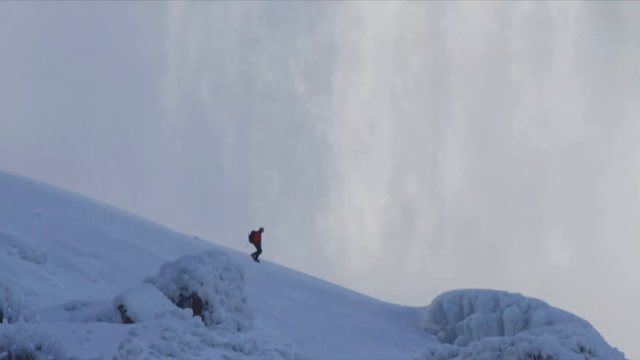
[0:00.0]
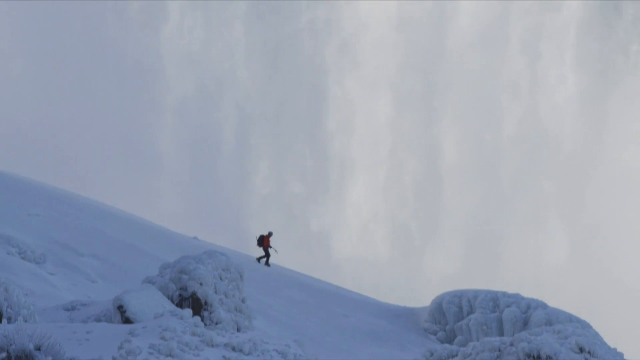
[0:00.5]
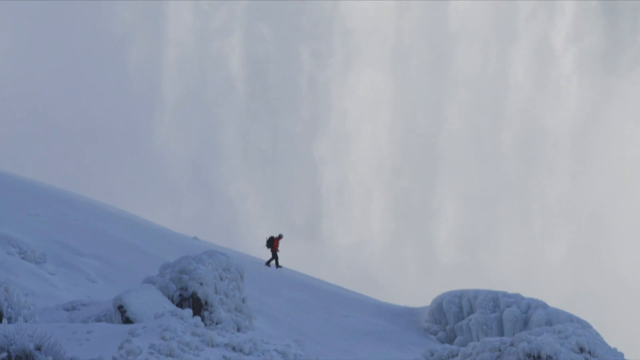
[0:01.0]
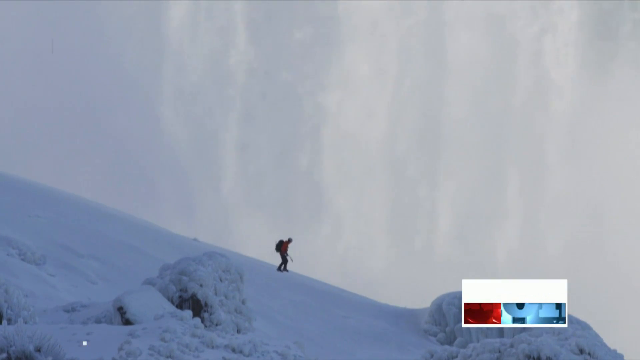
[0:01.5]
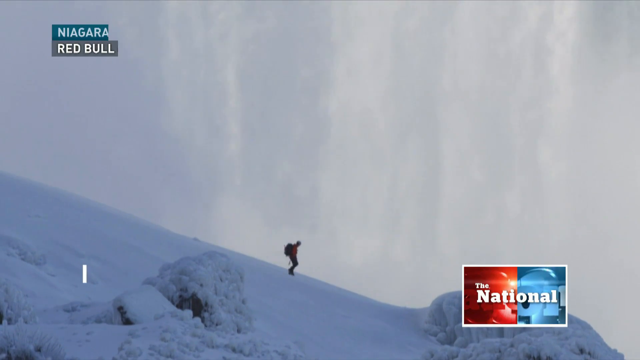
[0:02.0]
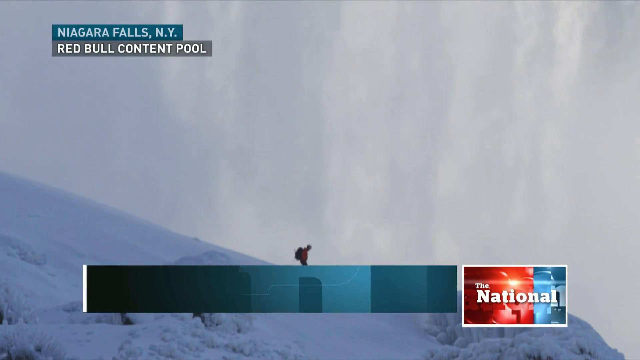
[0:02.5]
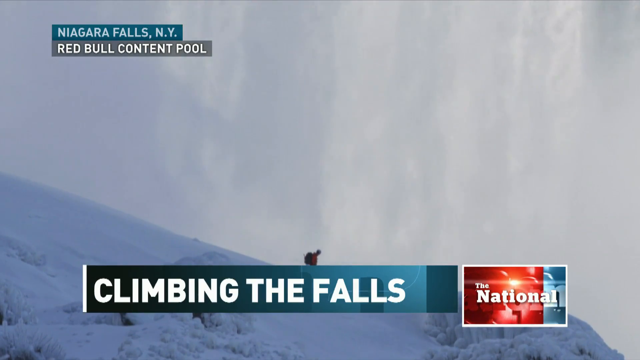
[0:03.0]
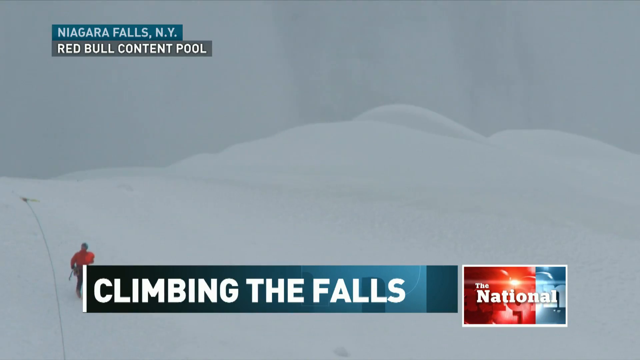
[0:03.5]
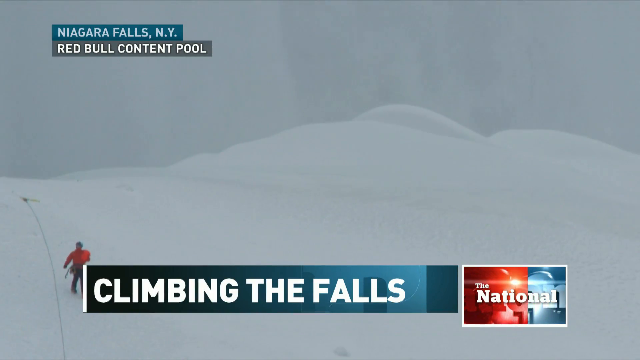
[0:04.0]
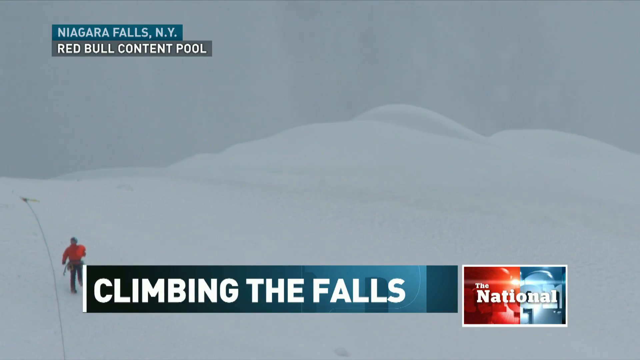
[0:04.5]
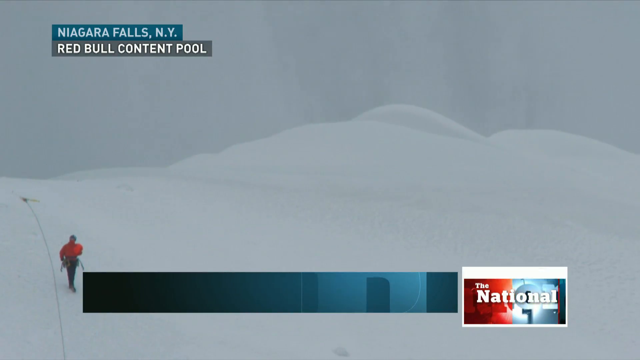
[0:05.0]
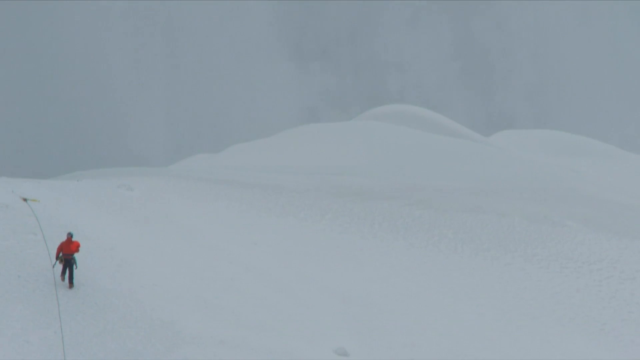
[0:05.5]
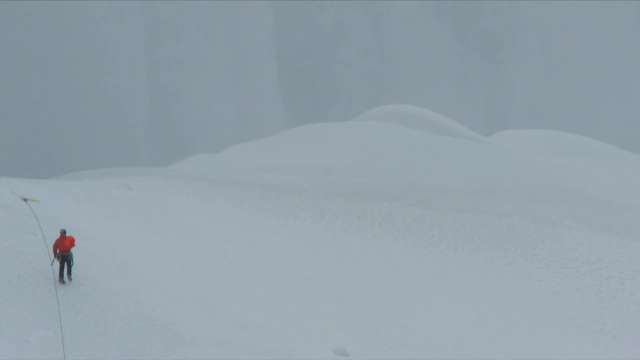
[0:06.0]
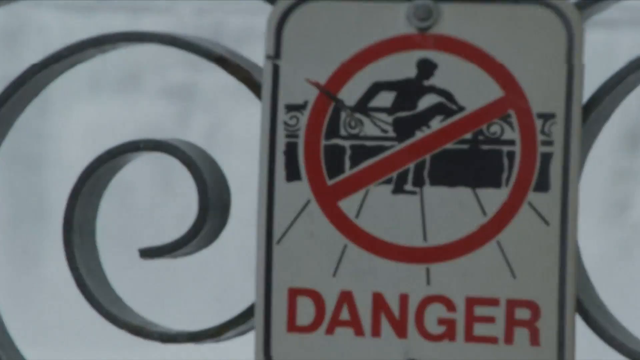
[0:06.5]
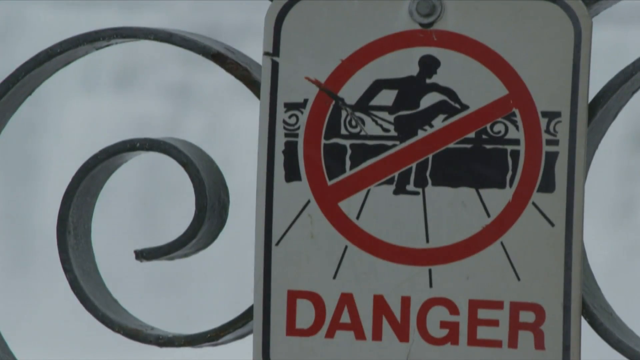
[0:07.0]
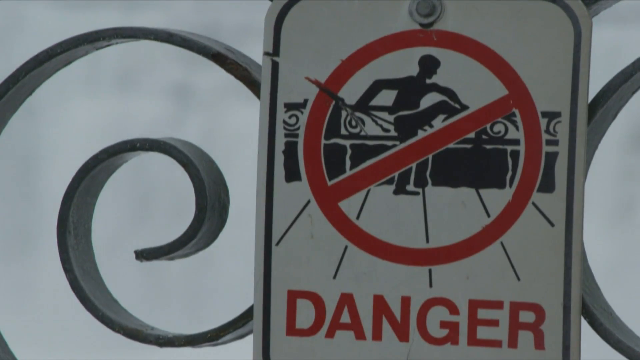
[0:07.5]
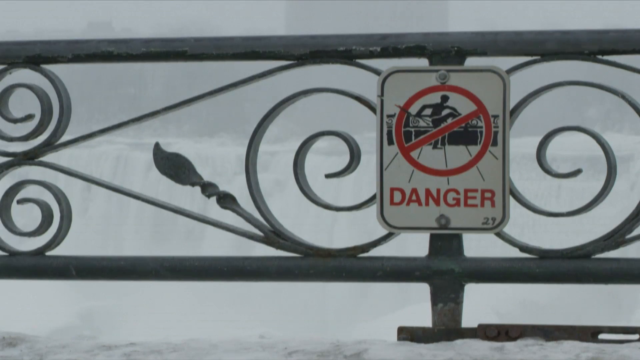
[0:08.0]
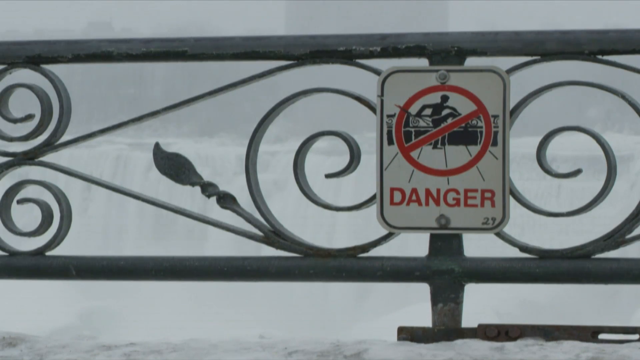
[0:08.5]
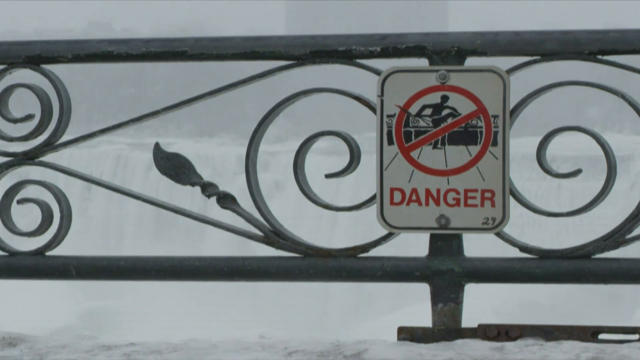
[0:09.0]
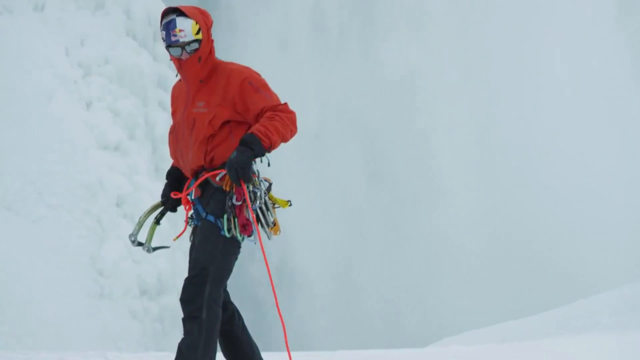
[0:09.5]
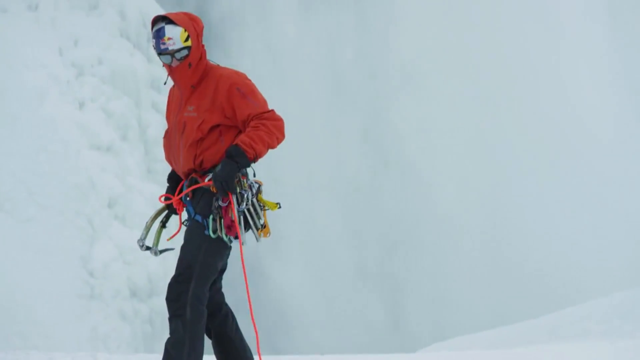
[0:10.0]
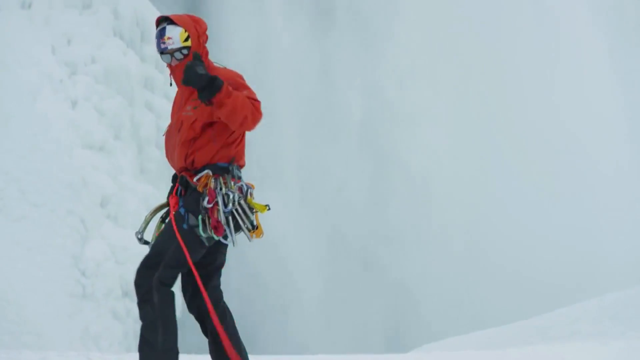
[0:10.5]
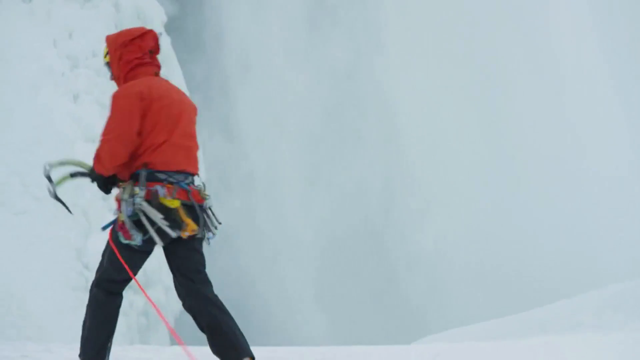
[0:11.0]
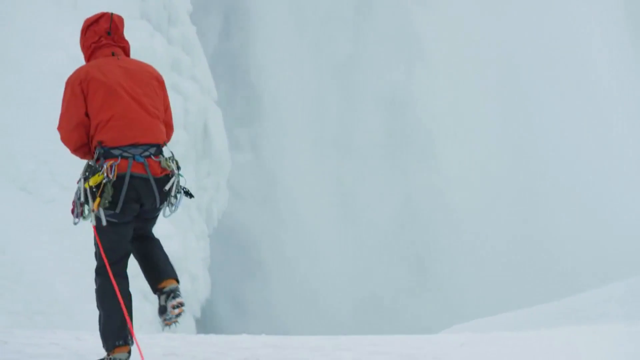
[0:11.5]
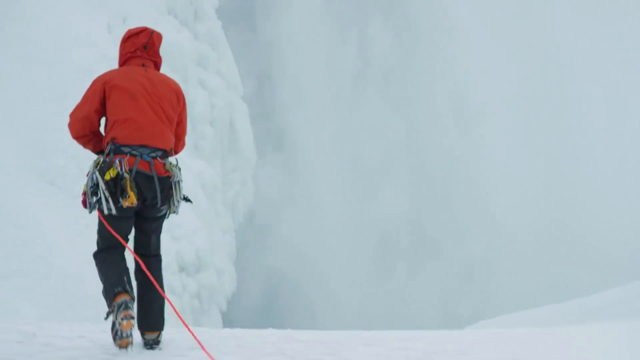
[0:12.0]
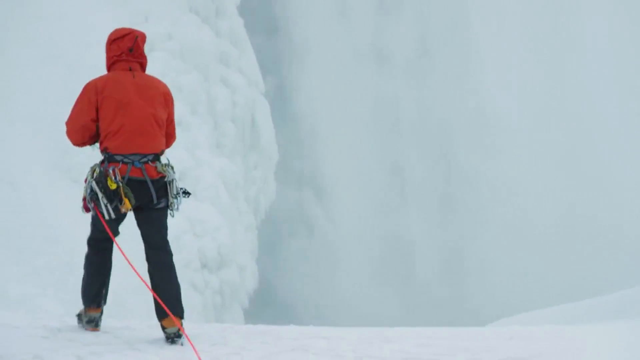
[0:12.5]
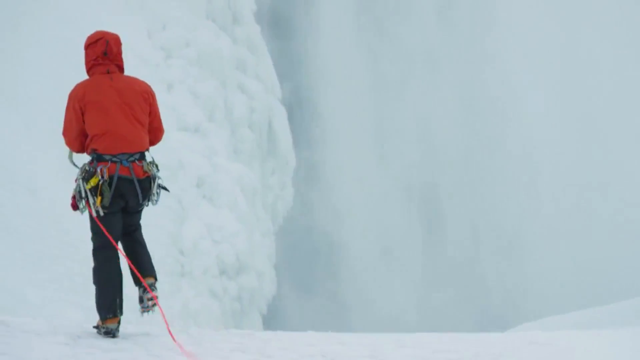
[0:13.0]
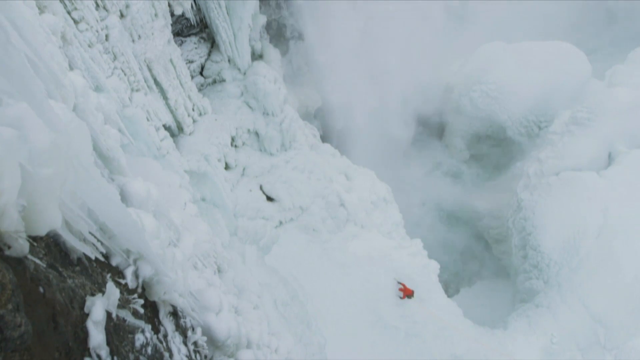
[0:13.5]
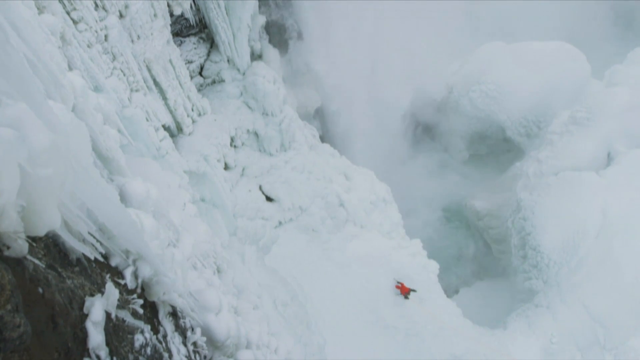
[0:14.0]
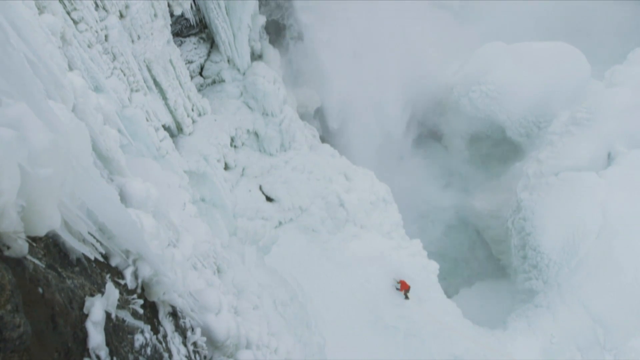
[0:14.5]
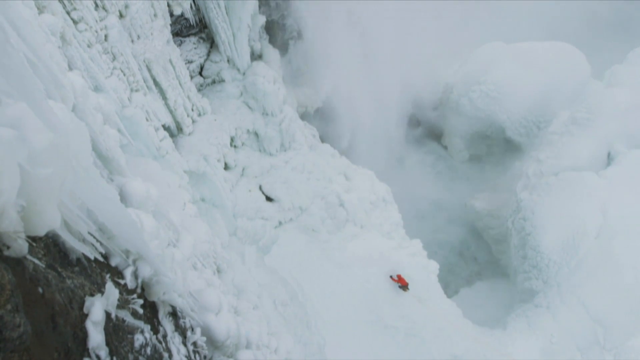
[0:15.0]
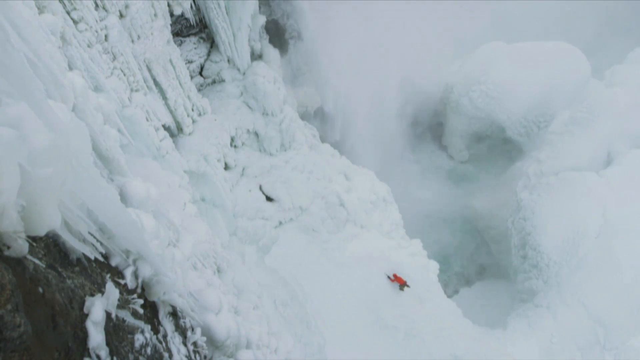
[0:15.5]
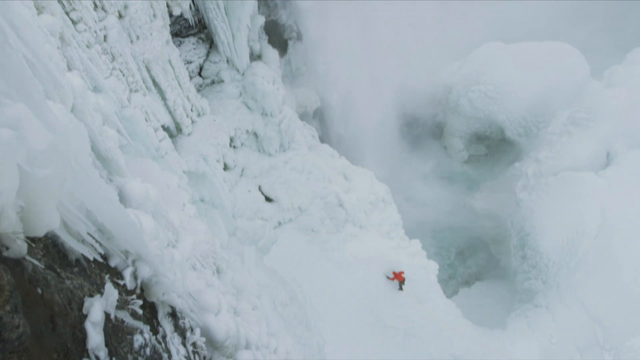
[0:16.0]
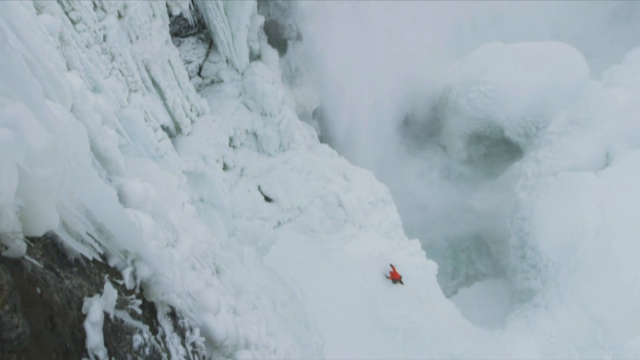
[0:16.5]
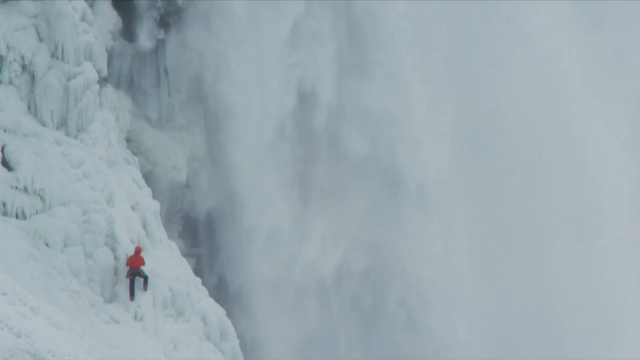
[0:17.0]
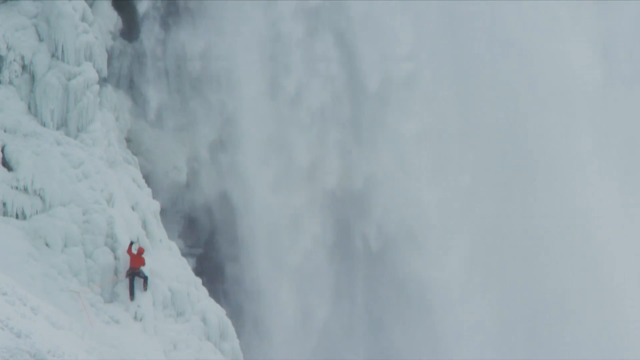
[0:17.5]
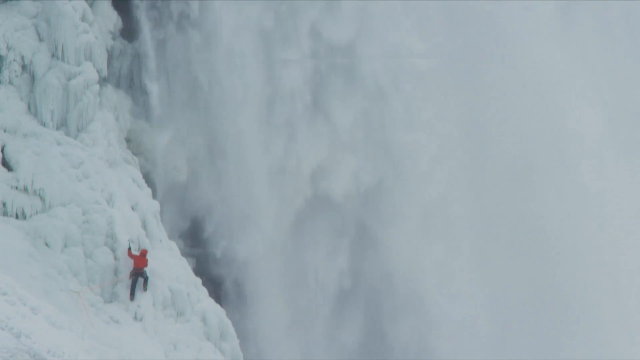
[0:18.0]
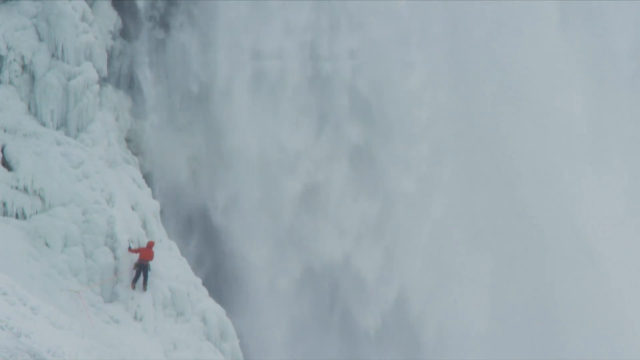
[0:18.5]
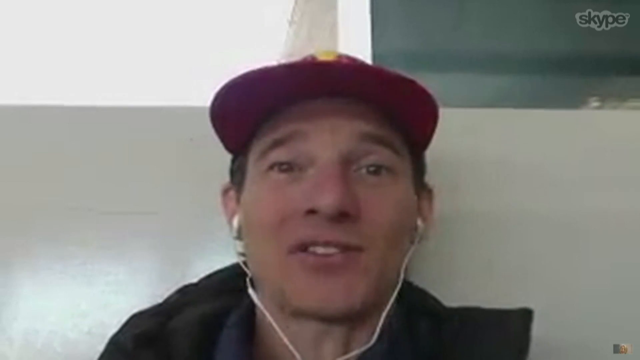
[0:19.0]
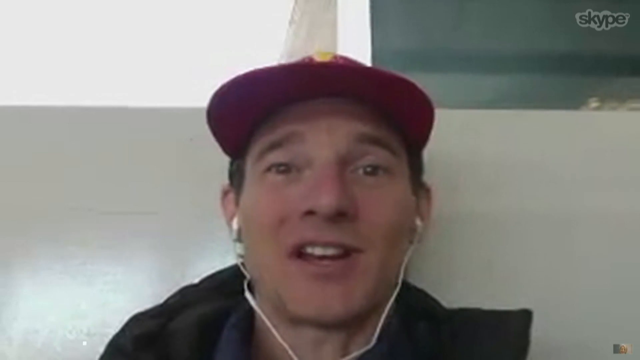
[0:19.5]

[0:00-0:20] Someone wearing a kind of backpack, dark-colored pants and a red shirt comes down a snow-covered mountain. There are no trees on the mountain and no sun; the background is a darker gray and the snowy area is white. A sort of line of rope seems to run behind the man and to the left. On-screen text reads "Niagara Falls, New York, Red Bull Content Pool"; below that, at the bottom, it reads "Climbing the Falls", and at the bottom right "The National". The man appears to go upward toward the rope. A close-up shows a person walking and raising one leg high, with a red circle superimposed over the image and a sort of line at an angle through it; below that is the word "danger" in red. Some wrought iron is shown behind that in a circular manner. A close-up shows the man in a red jacket with a red hood. He seems to wear some sort of reflective protective headgear, and he has glasses on. Many clips, silver round items, hang along his belt. He is shown walking along, with water kind of steaming to the right. A wider shot shows the man in red walking along a kind of icy area, using a tool or pick to kind of climb up. A close-up then shows a man wearing a red hat and a black shirt, with white earbuds in his ears and wires falling down from them. He speaks, and an image or words at the top left read "New York".